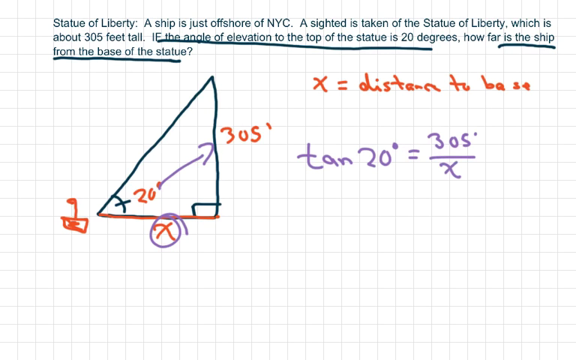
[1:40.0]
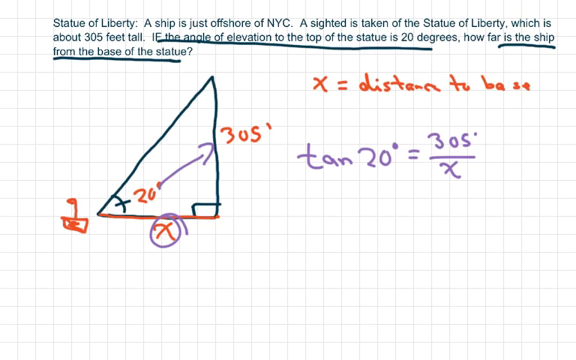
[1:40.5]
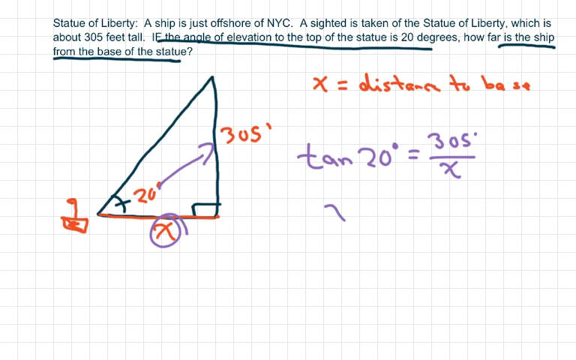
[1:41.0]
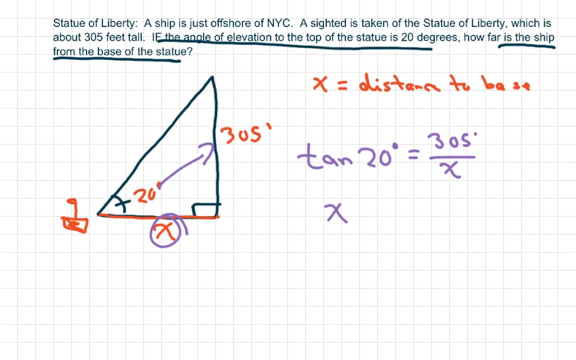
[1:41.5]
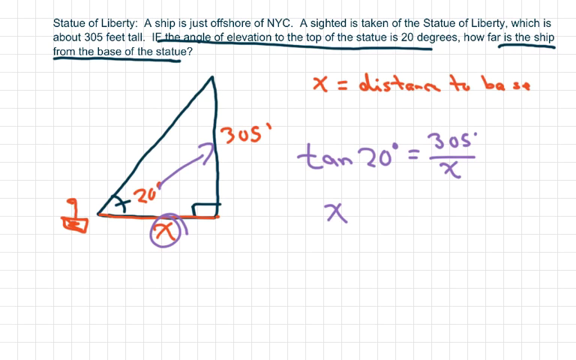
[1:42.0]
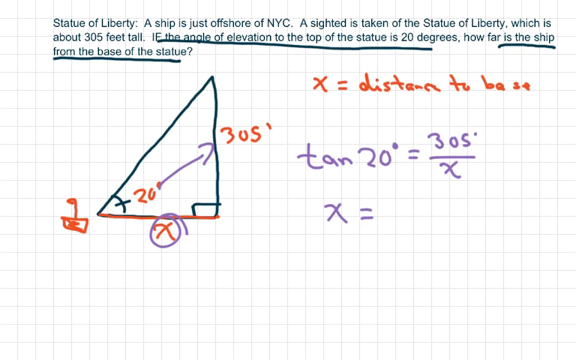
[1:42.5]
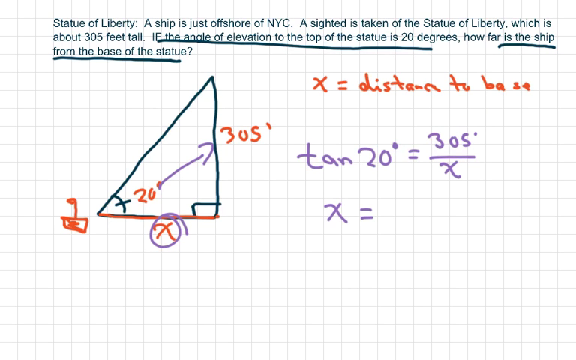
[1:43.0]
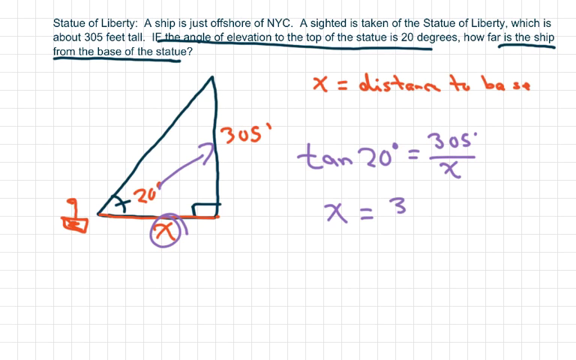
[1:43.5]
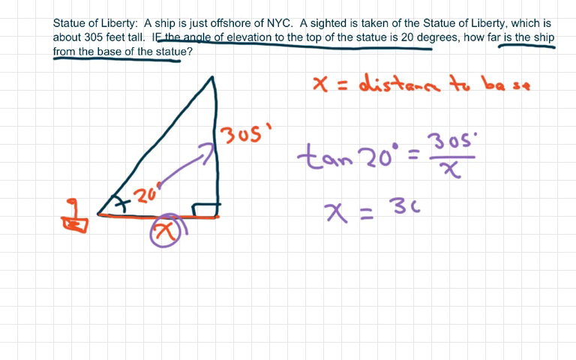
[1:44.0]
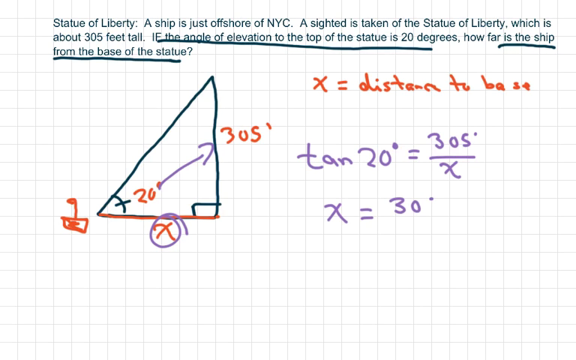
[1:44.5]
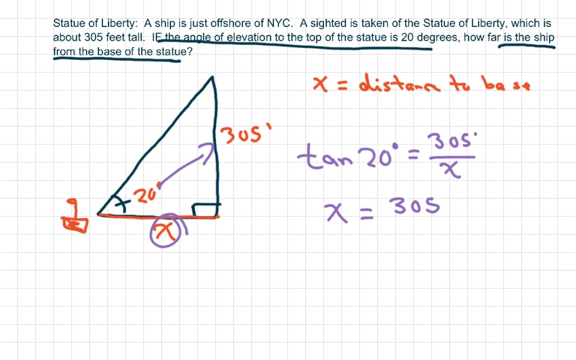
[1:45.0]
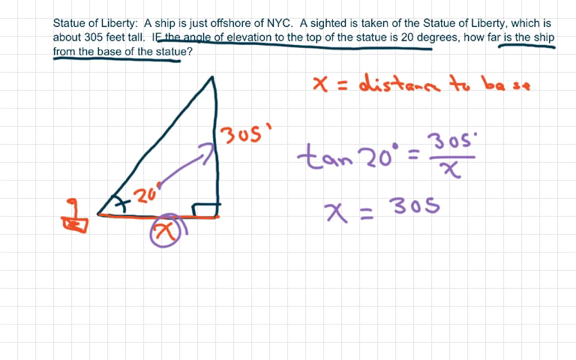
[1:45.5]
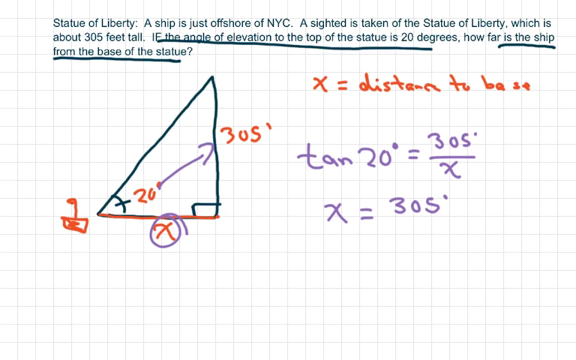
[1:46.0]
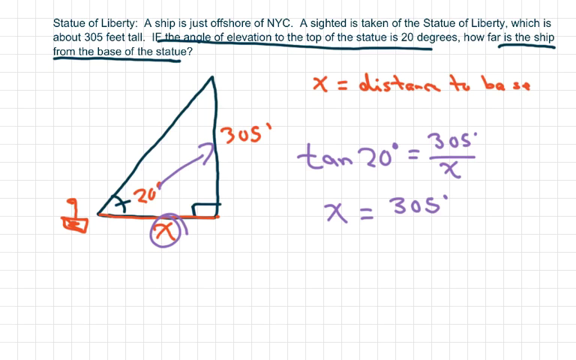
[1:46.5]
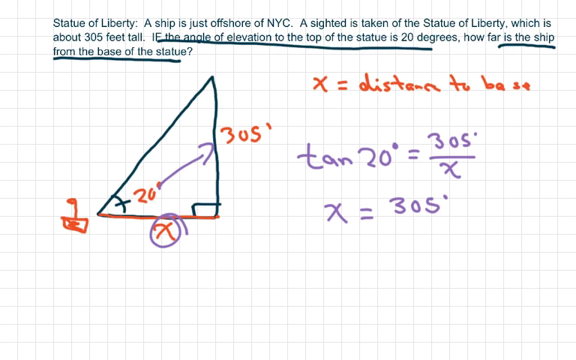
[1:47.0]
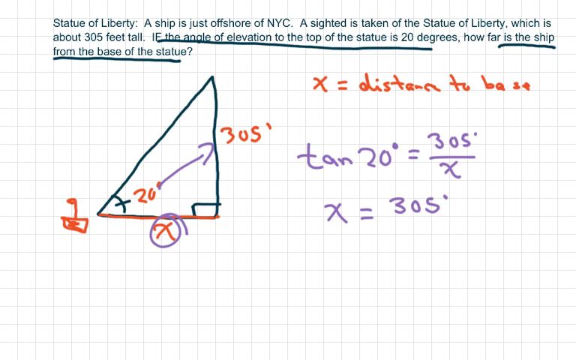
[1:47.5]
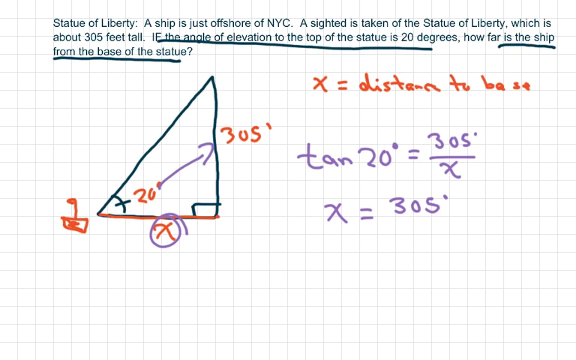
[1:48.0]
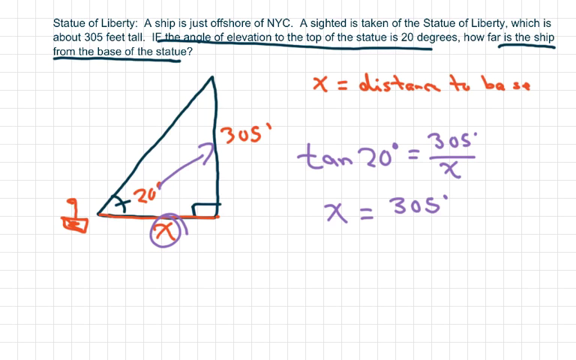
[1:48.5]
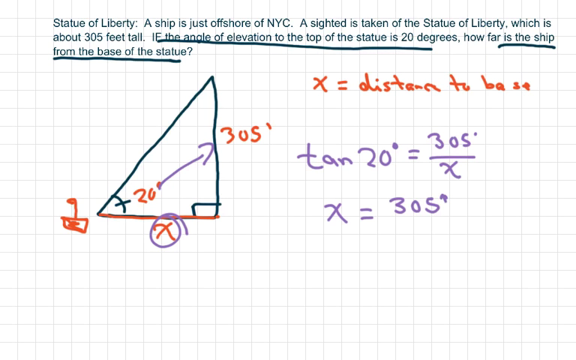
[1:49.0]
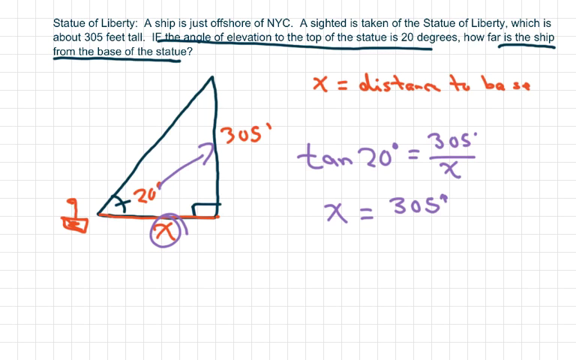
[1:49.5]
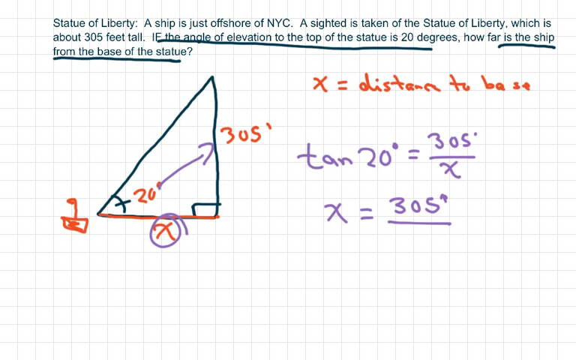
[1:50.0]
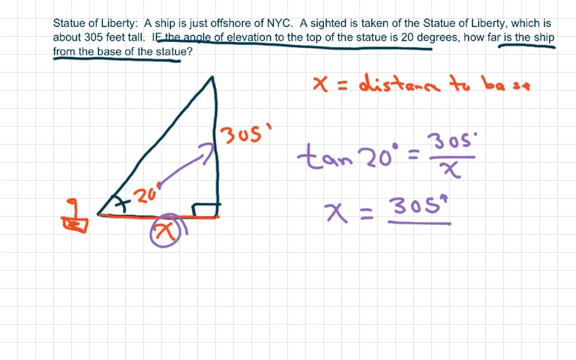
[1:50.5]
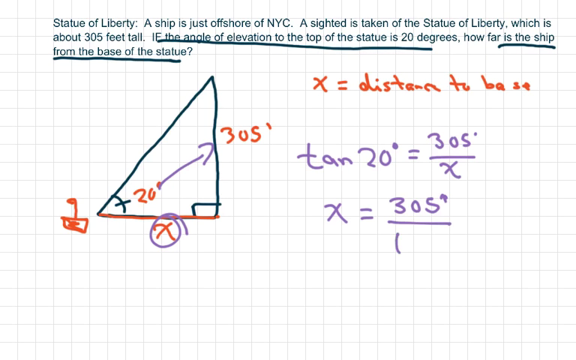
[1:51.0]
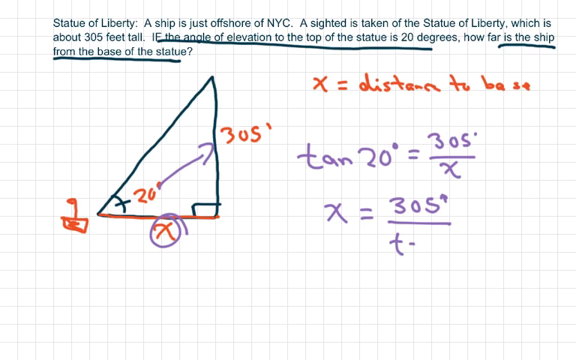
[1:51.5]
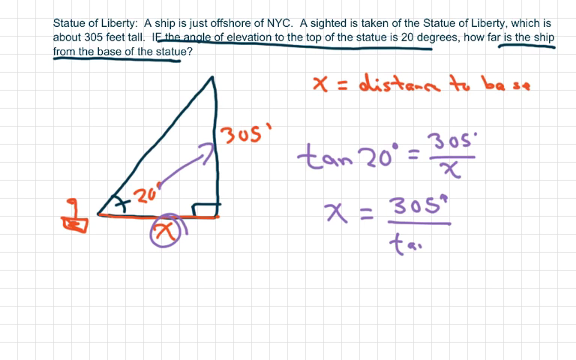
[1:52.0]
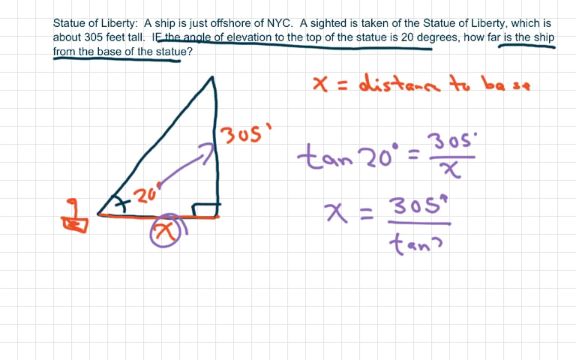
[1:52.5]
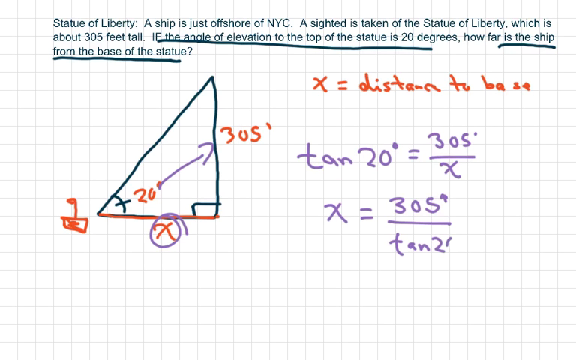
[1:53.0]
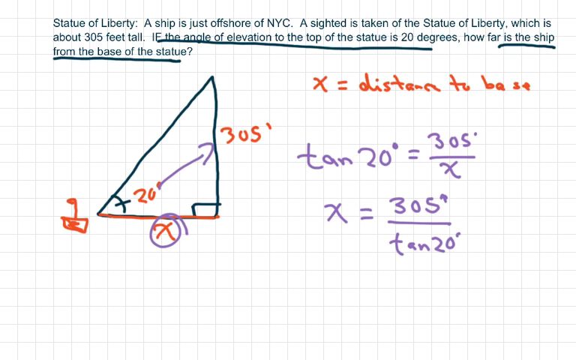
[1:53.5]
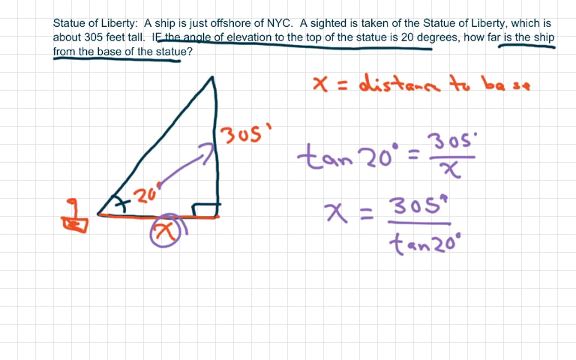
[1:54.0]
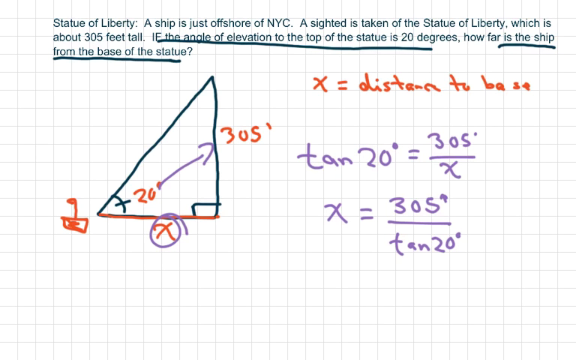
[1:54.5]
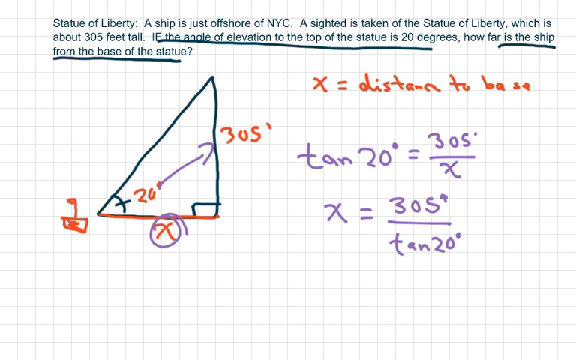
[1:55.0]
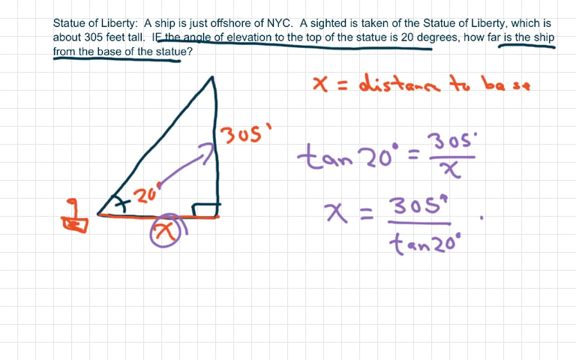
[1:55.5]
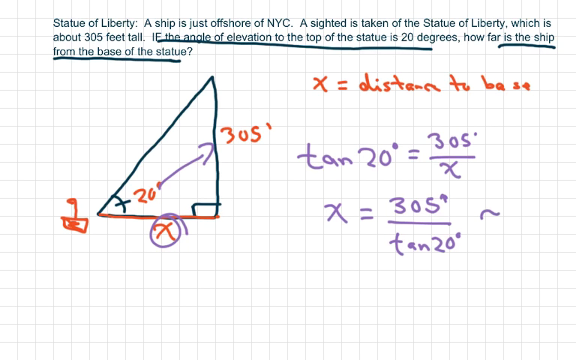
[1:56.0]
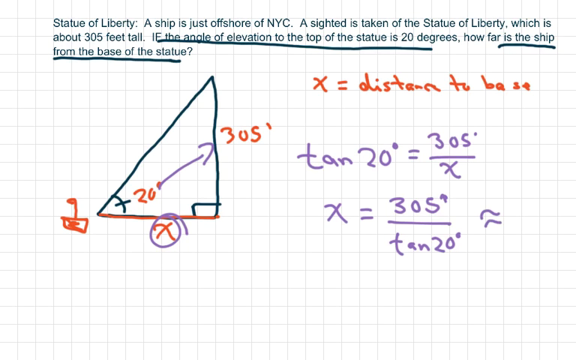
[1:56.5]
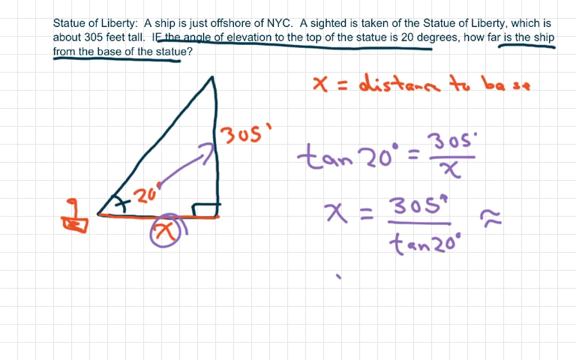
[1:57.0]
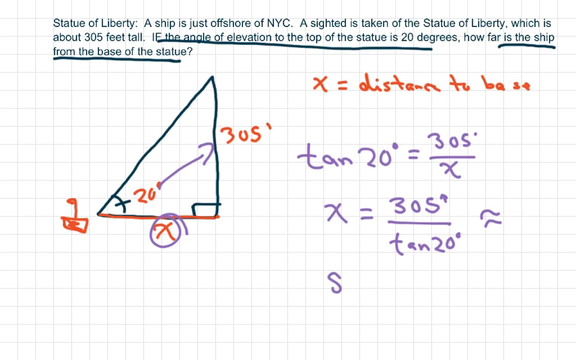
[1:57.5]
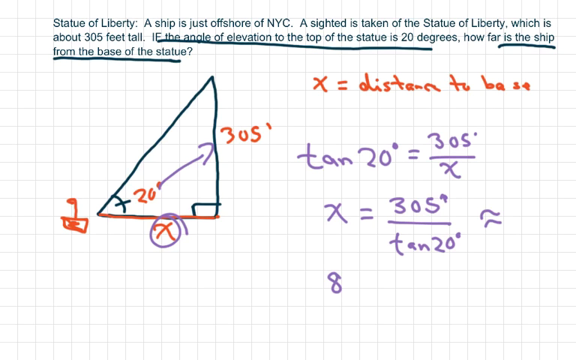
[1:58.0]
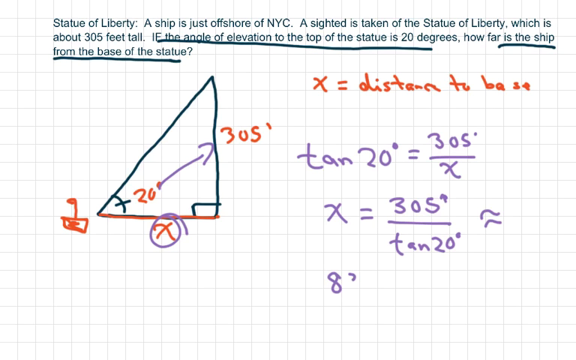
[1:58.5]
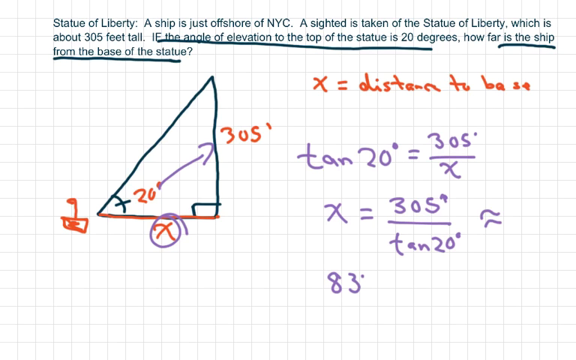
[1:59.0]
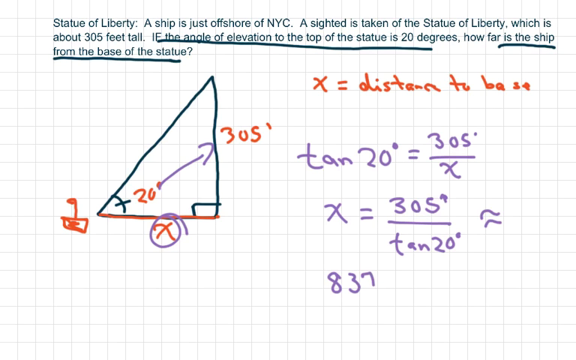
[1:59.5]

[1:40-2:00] A word problem is at the top of what looks like white graph paper, reading "Statue of Liberty: A ship is just offshore of NYC. A sighted is taken of the Statue of Liberty, which is about 305 feet tall. If the angle of elevation to the top of the statue is 20 degrees, how far is the ship from the base of the statue?" Underneath on the left side is a triangle with a small box in the bottom right corner indicating 90 degrees, "20 degrees" at the bottom left angle, and "305'" on its right side. On the right side of the screen, text at the top in red marker reads "X equals distance to base," and underneath it in light purple marker is "tan 20 degrees equals 305' over X." More text is then written in light purple underneath: "x equals 305' divided by tan 20 degrees." Next to that is what looks like an equal sign made of two squiggly lines, and underneath, 837 is written.